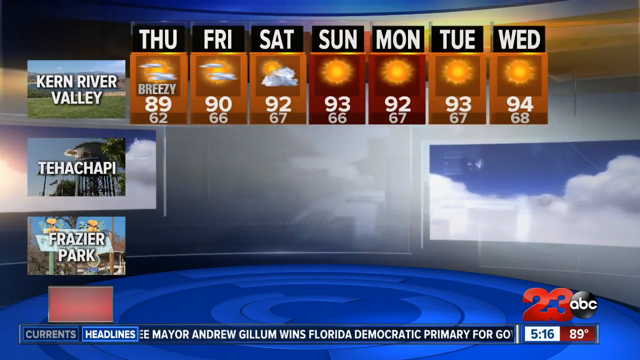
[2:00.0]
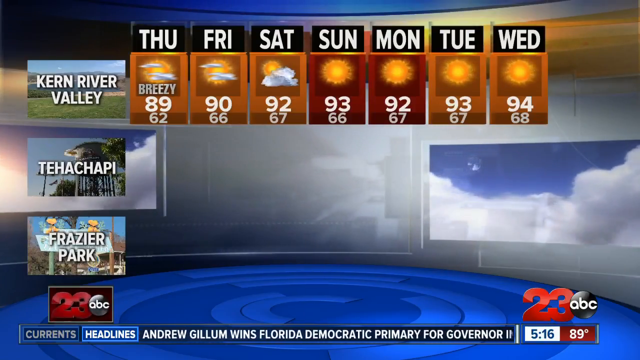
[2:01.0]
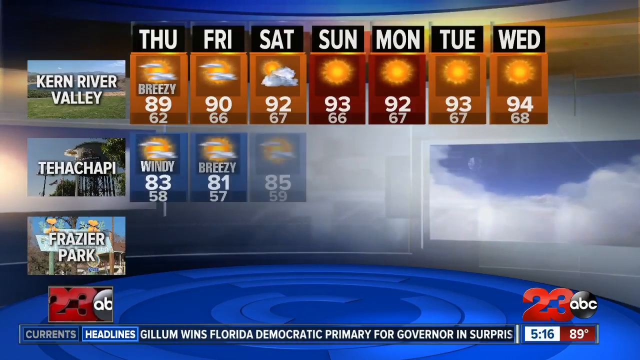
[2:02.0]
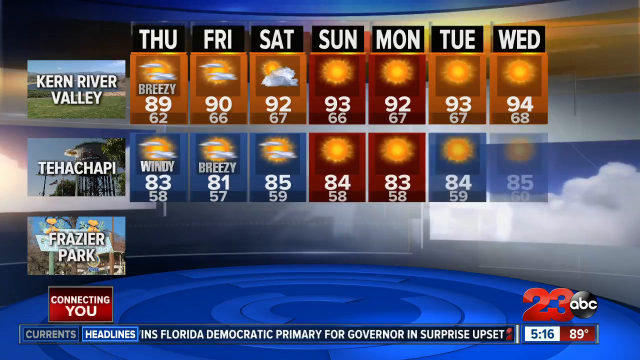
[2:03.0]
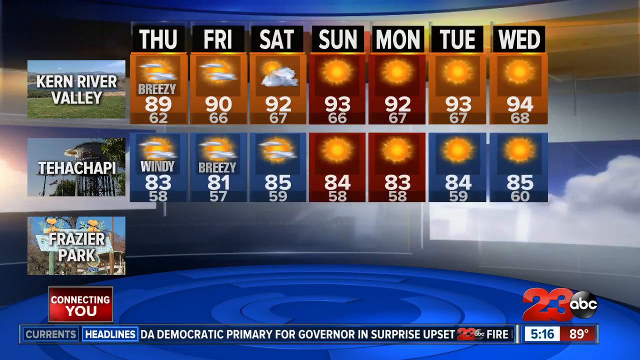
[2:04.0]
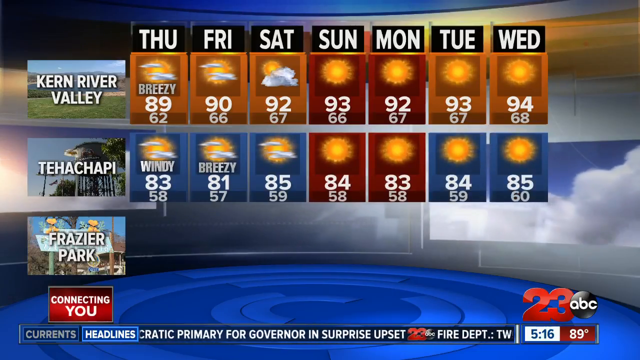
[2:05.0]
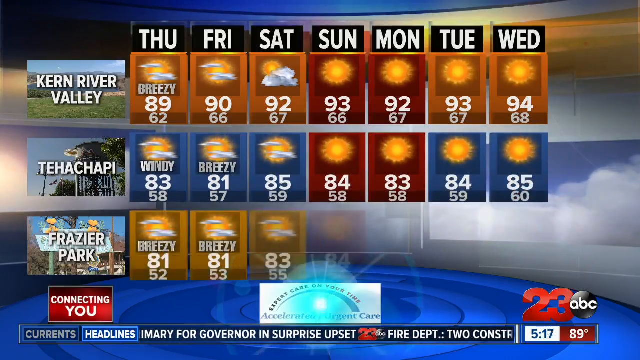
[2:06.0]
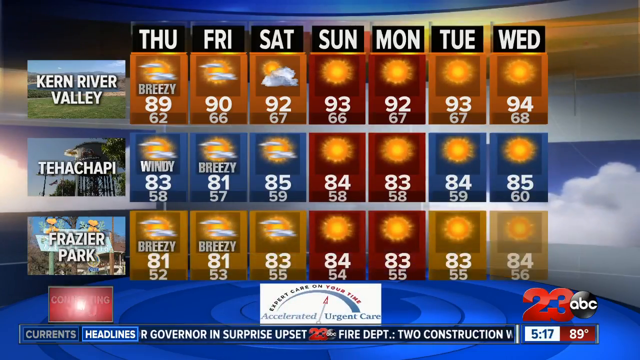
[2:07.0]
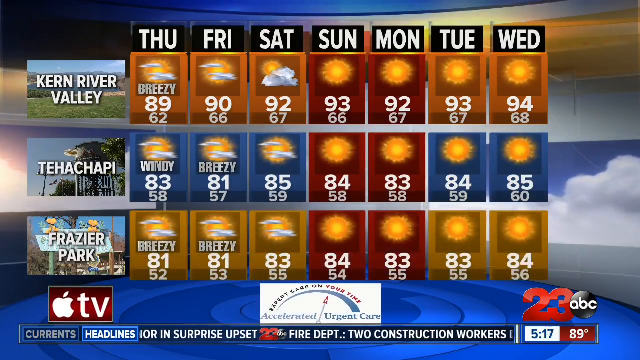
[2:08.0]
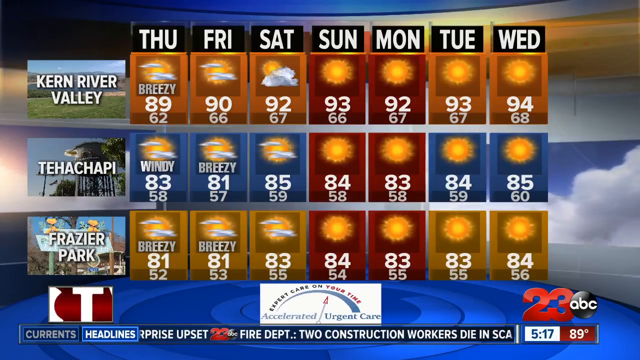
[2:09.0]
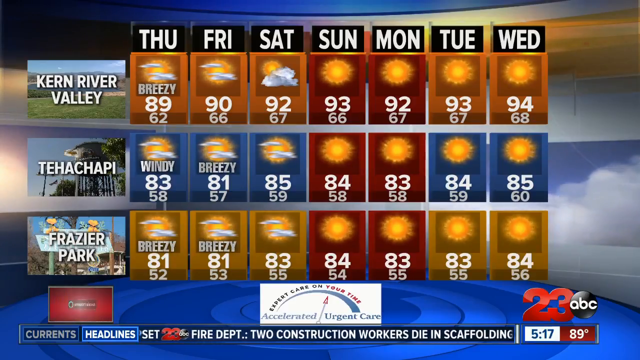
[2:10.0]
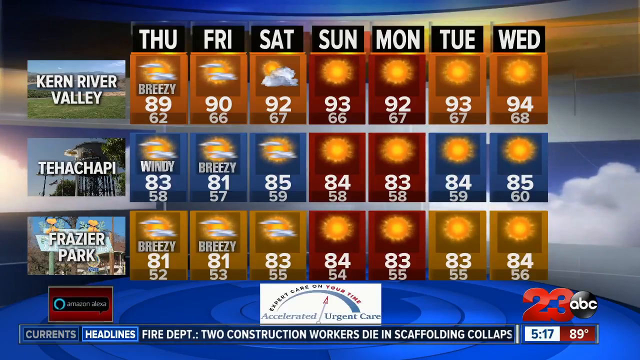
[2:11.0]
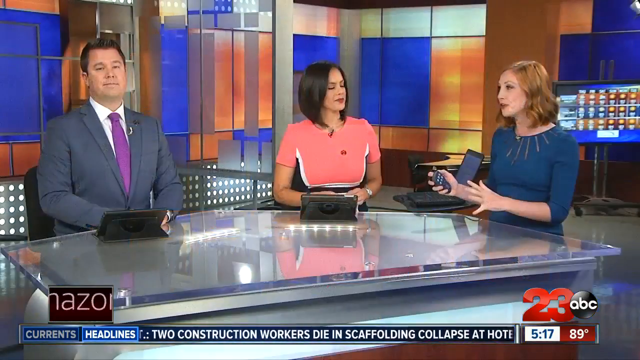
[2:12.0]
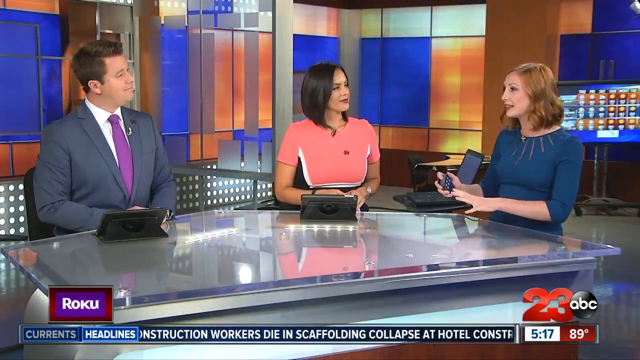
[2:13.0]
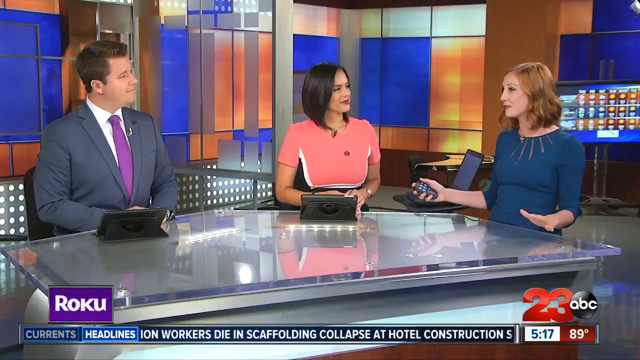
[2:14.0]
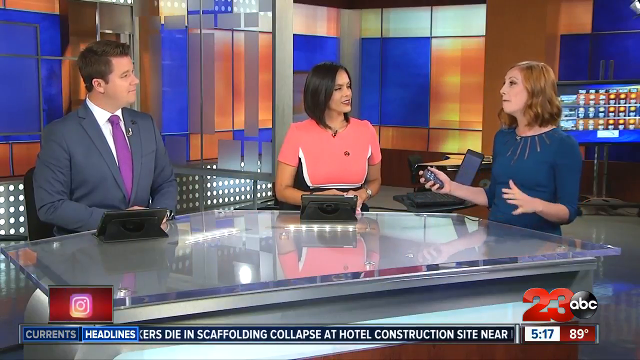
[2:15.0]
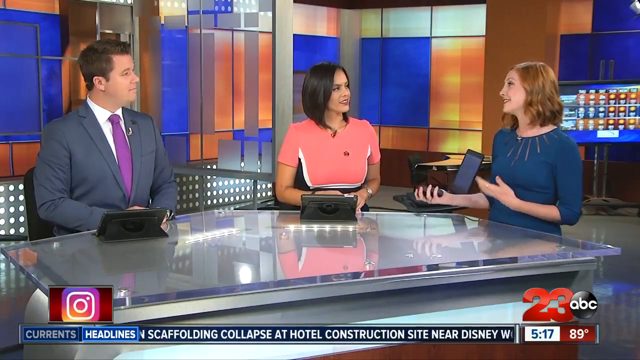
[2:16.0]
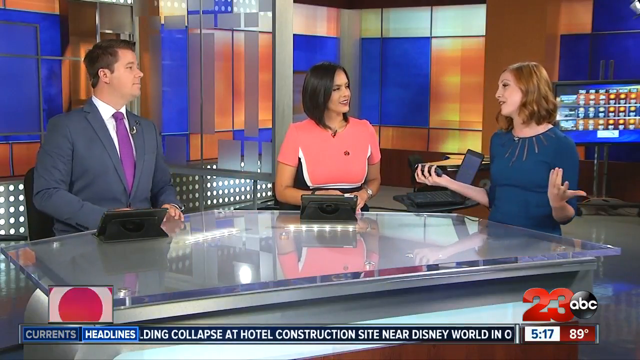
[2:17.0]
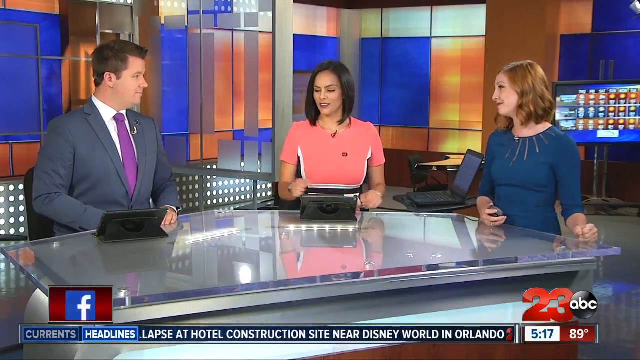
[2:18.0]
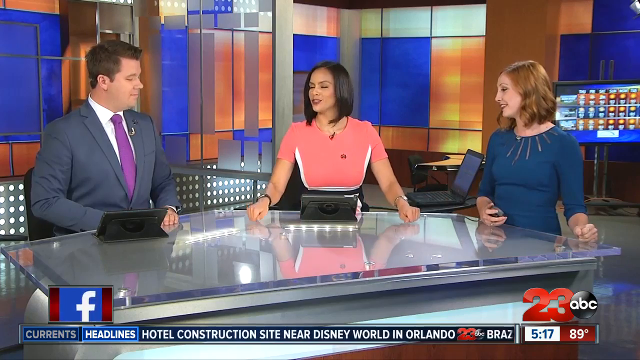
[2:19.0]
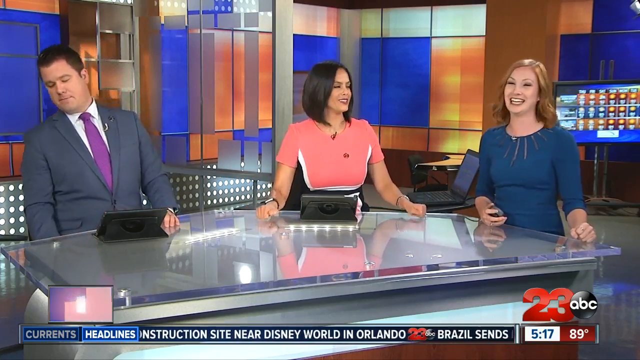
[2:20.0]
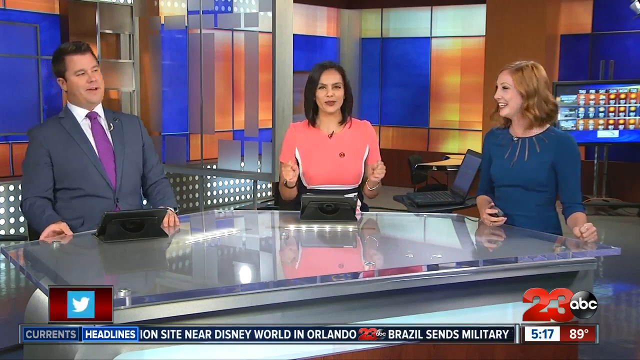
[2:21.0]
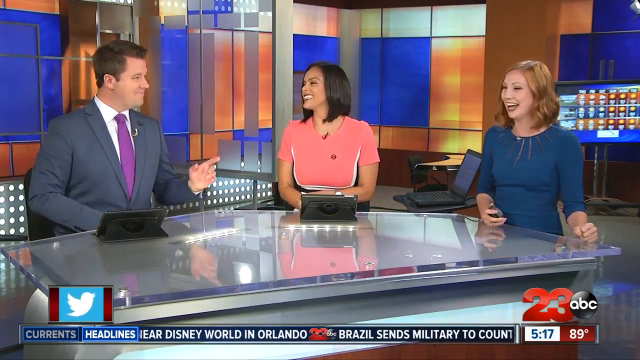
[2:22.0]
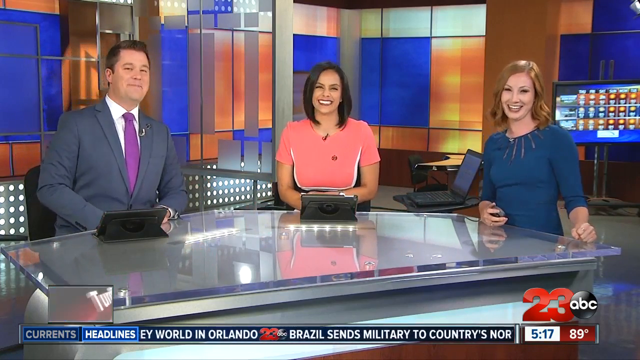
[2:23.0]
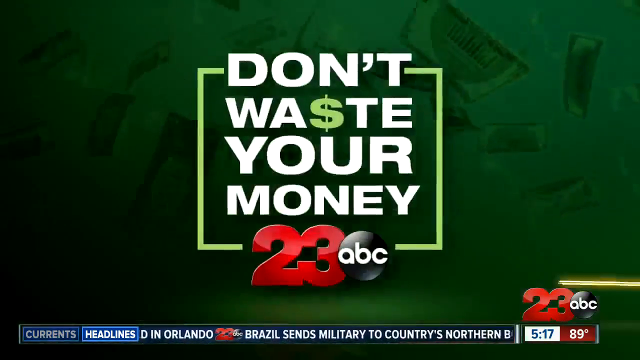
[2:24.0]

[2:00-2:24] A screen display in a weather report studio shows the days of the week with different numbers, from Thursday through Friday, Saturday, Sunday, Monday, Tuesday and Wednesday. In the corner are panels labeled "Kern River Valley", "Tehachapi" and "Frazier Park", and the screen shows breezy and windy conditions on different days for each place. The scene changes: a male news reporter in a blue suit, white shirt and purple tie with short black hair, a female reporter in a pink, white and black dress with long black hair, and another female reporter with long blonde hair in a blue dress sit together in the newsroom, talking and interacting with each other. The screen then changes to white text reading "don't waste your money 23 ABC".